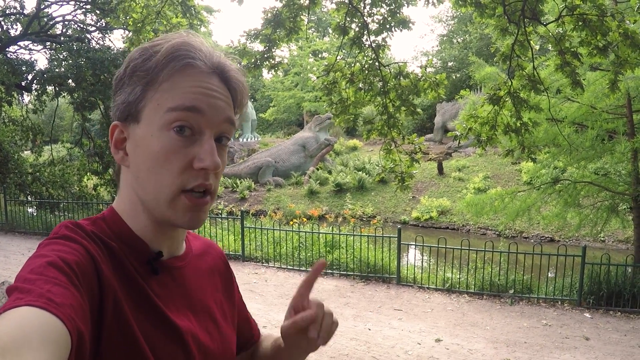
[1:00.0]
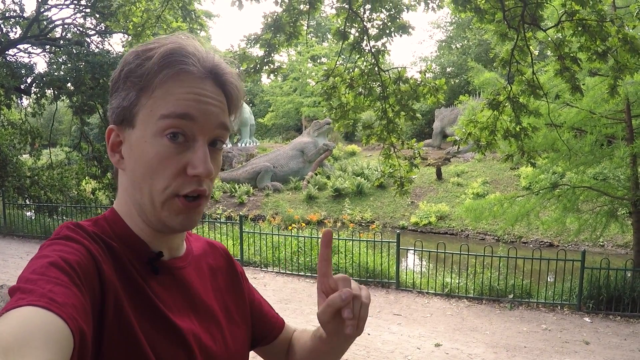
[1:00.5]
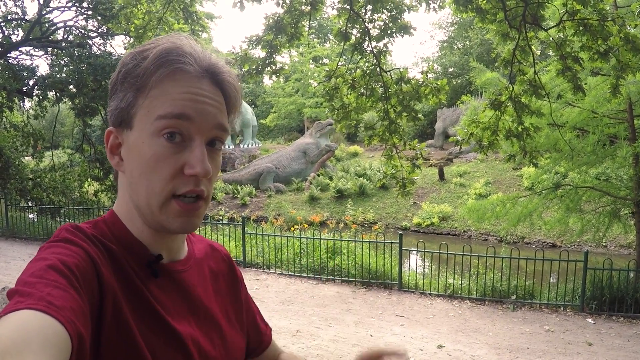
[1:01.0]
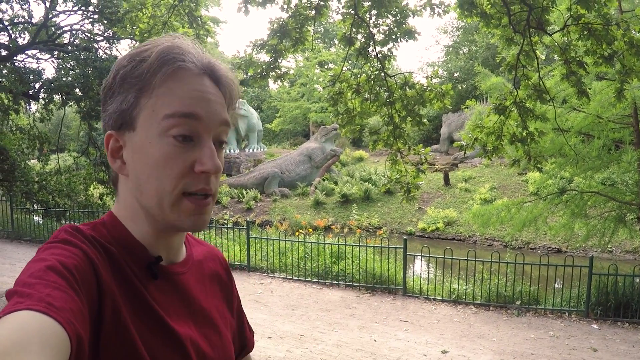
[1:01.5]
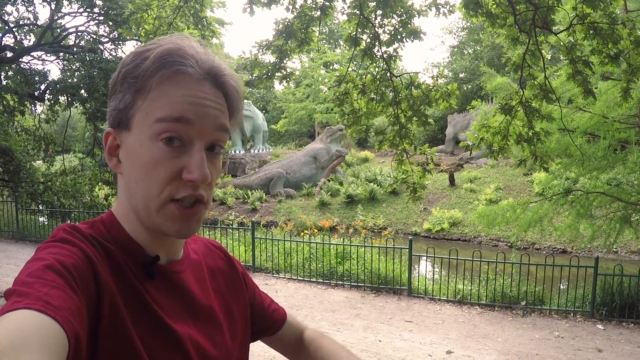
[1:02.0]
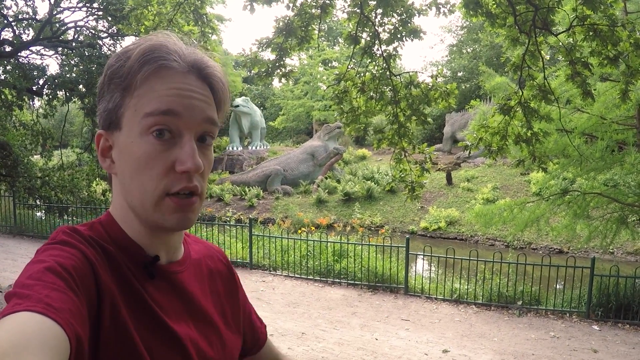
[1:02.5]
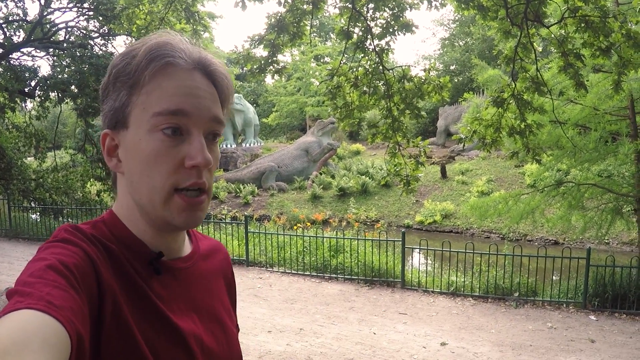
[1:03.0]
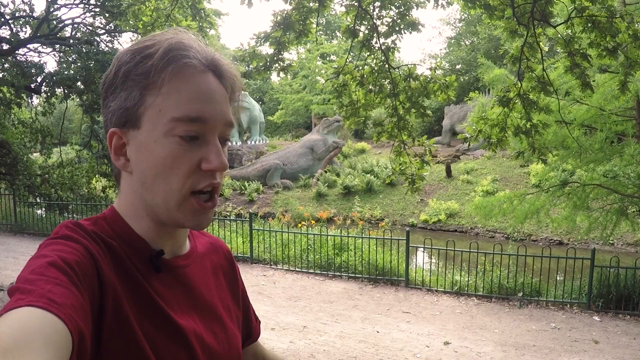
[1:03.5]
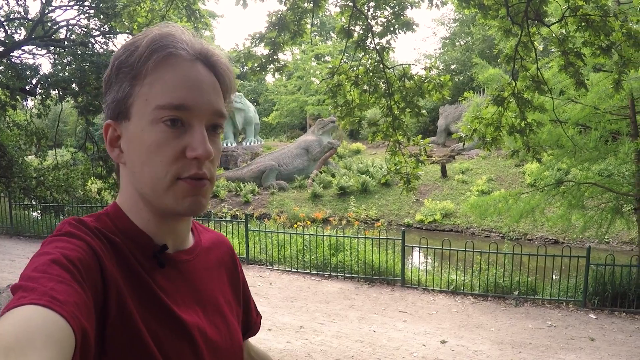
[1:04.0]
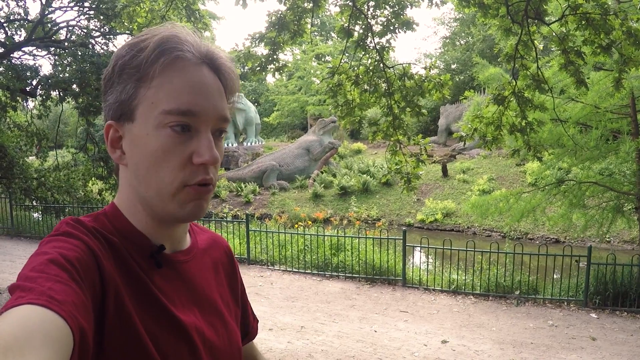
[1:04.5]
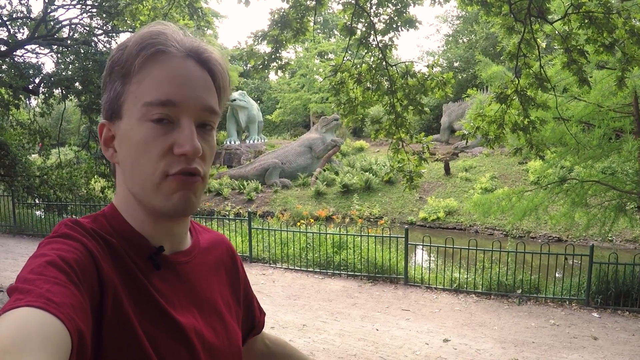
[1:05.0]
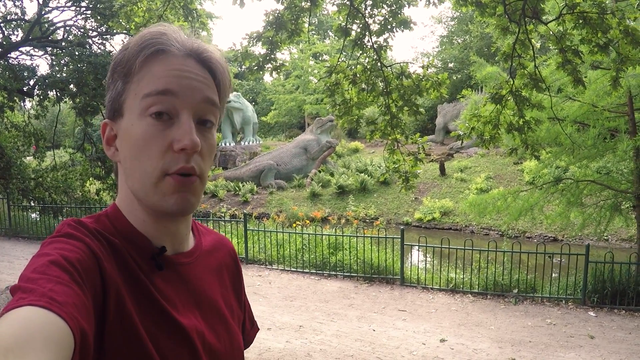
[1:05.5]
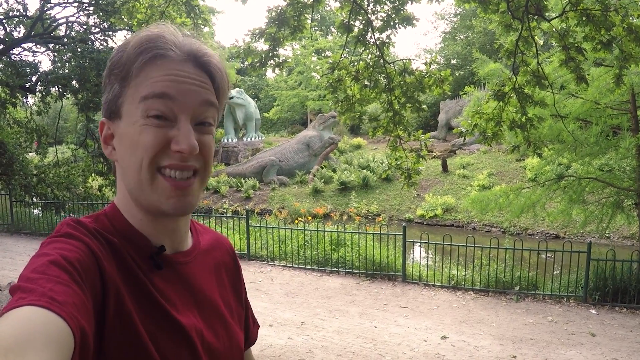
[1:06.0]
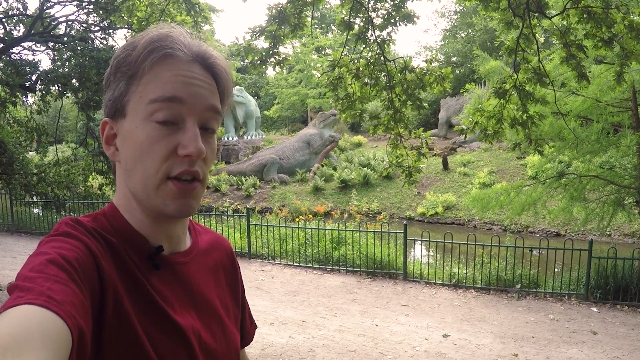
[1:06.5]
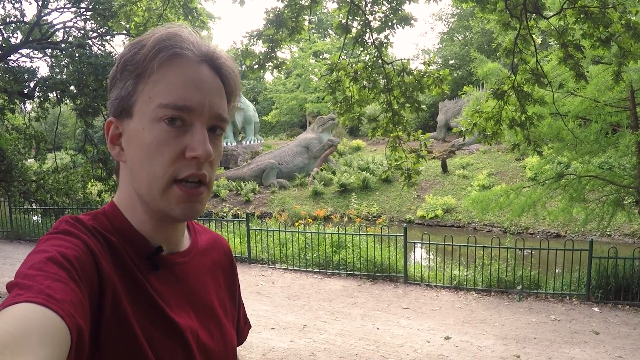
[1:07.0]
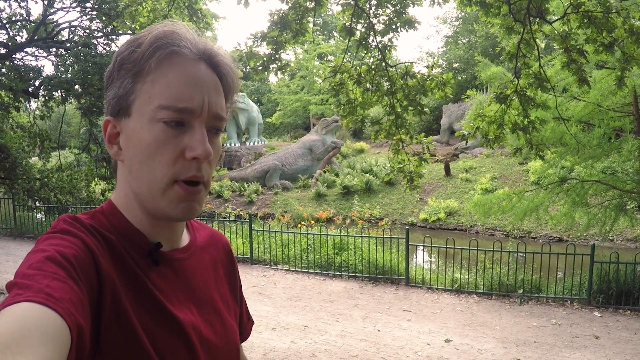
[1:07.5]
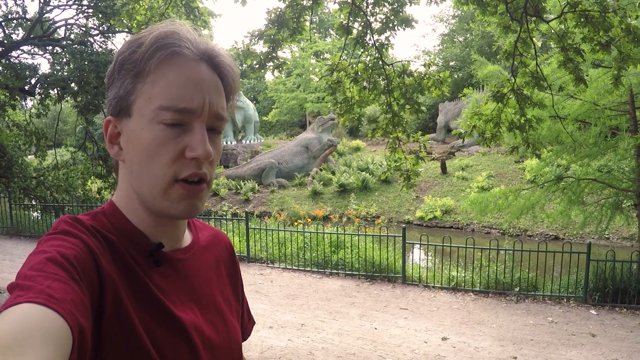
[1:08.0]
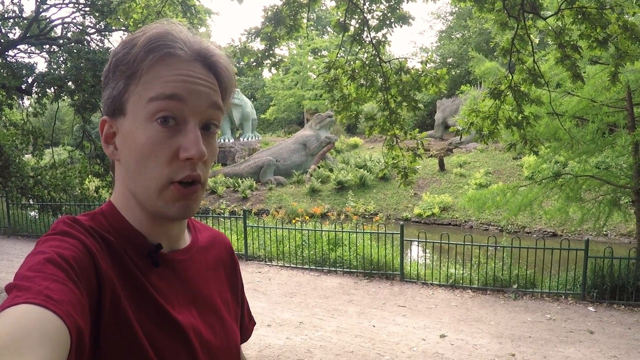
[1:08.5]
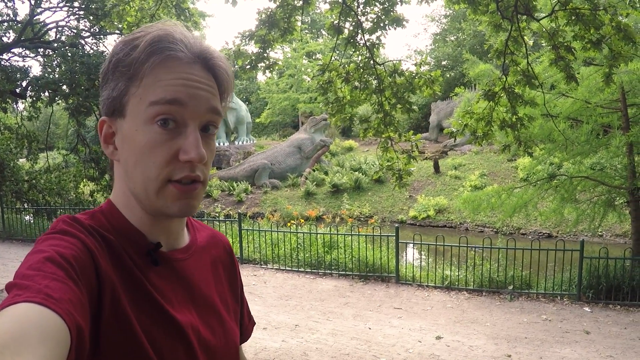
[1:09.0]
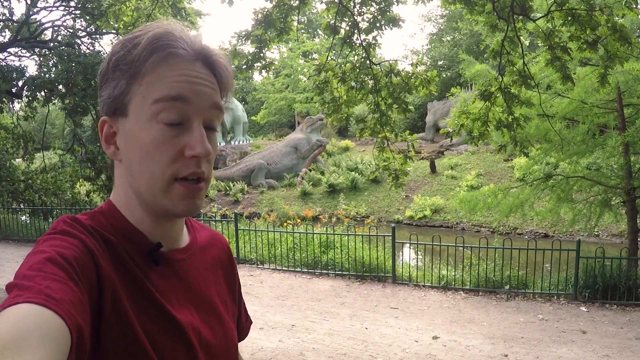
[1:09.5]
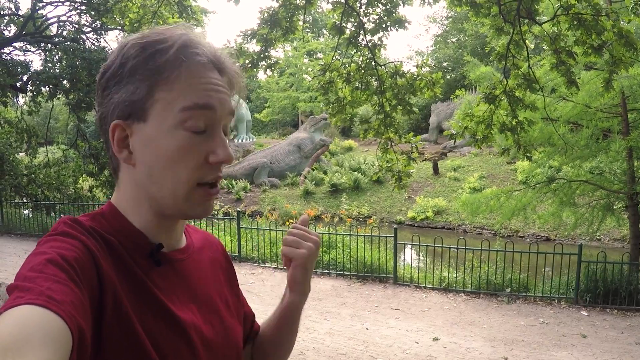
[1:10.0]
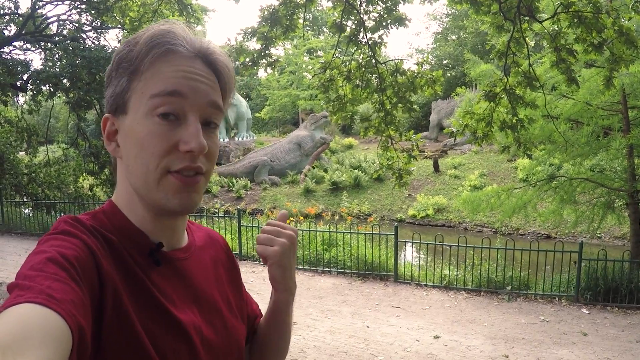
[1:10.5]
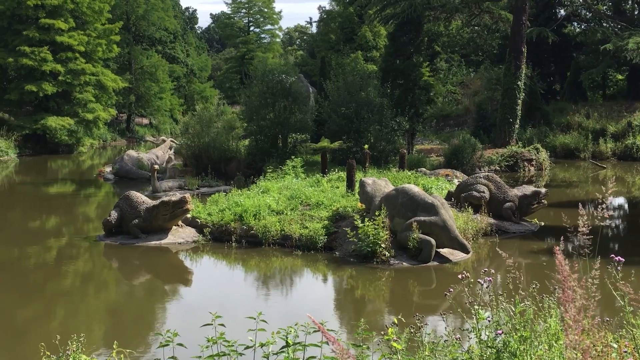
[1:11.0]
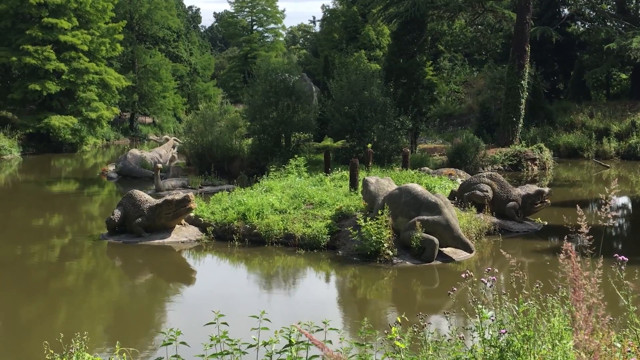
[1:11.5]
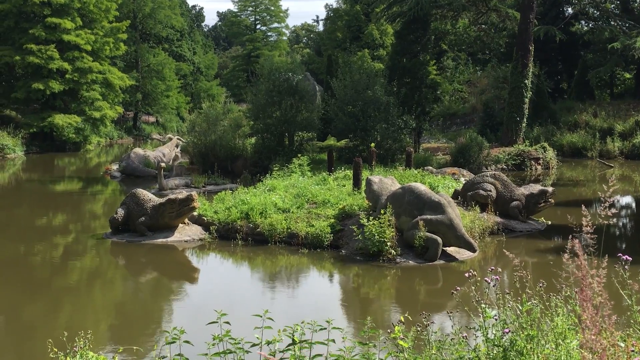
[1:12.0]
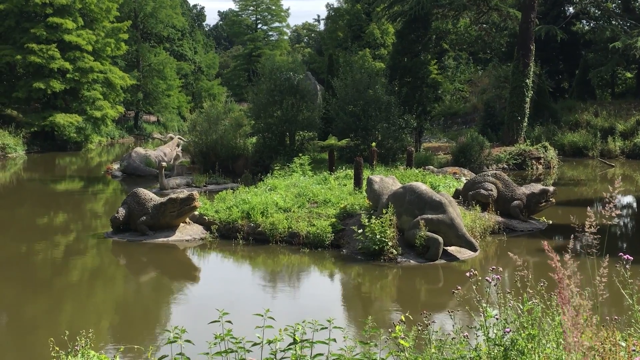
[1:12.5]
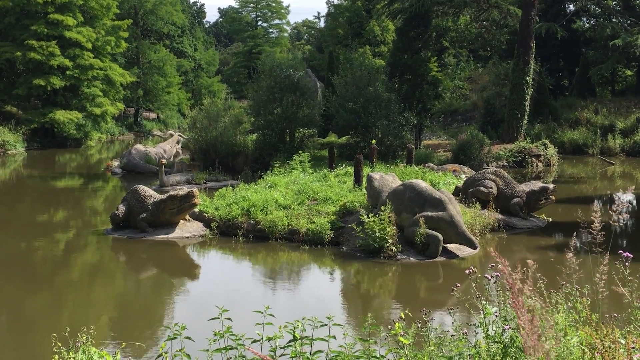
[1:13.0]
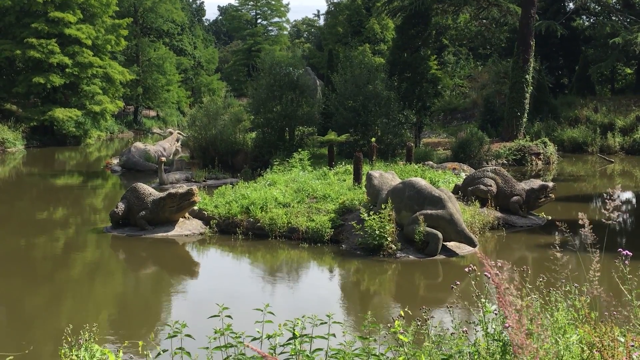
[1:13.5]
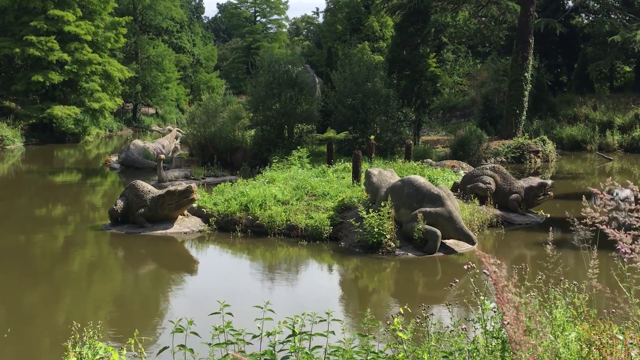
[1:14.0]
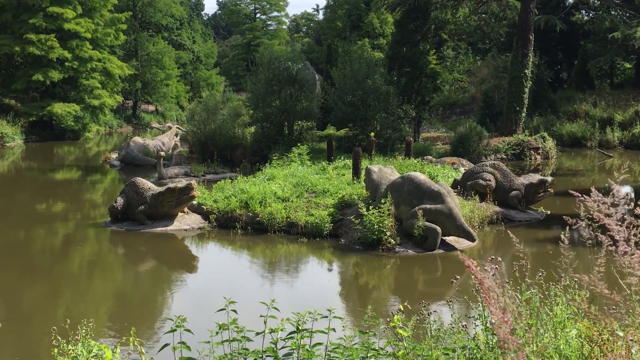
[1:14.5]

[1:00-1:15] A male presenter speaks directly to the camera, gesturing with one hand and holding a camera or camera phone in front of him with the other. He has short hair and wears a short-sleeved red t-shirt without a collar, with a microphone clipped to its neck. Behind him is a display of life-sized dinosaur statues in a green setting. He gestures back to them, and the video switches to another view of the park showing the dinosaur statues arranged in a lagoon area with a central island that looks like it is covered in grass. Grass covers the entire area around the edges of the water, and it is surrounded by very lush, green trees densely covered with leaves. The video briefly switches back to the presenter, who speaks and gestures with very animated facial expressions and gestures back toward the display. He is standing on a walkway in front of the display, with a very short metal fence behind him separating the walkway from the display with the statues in it.